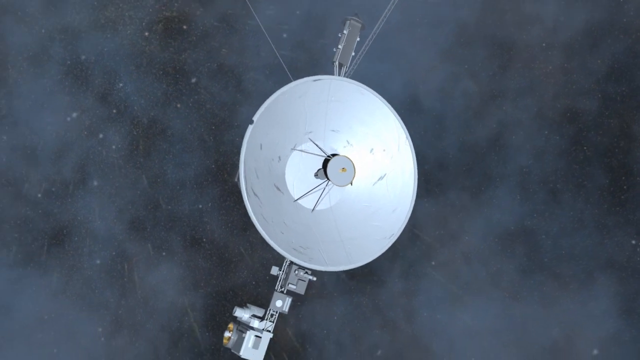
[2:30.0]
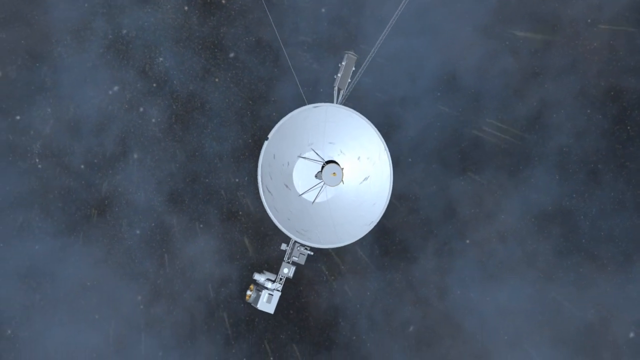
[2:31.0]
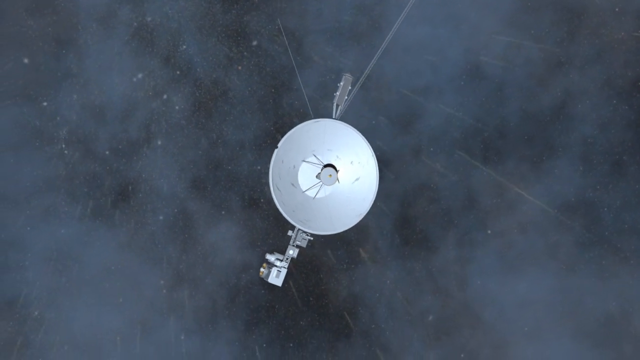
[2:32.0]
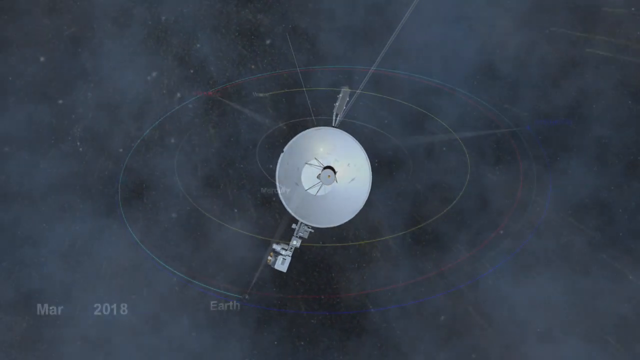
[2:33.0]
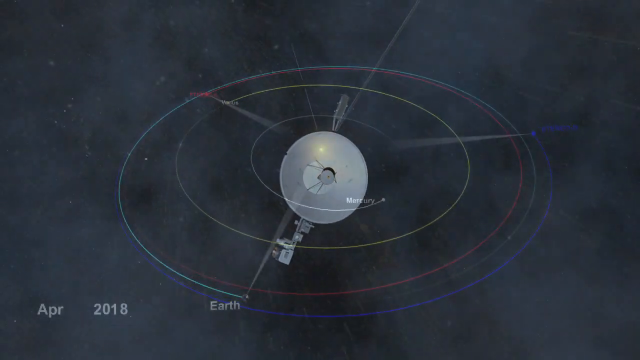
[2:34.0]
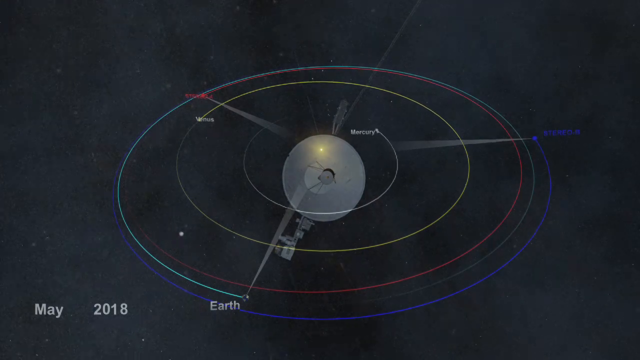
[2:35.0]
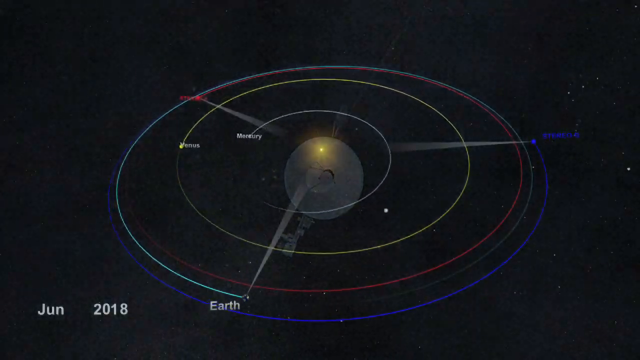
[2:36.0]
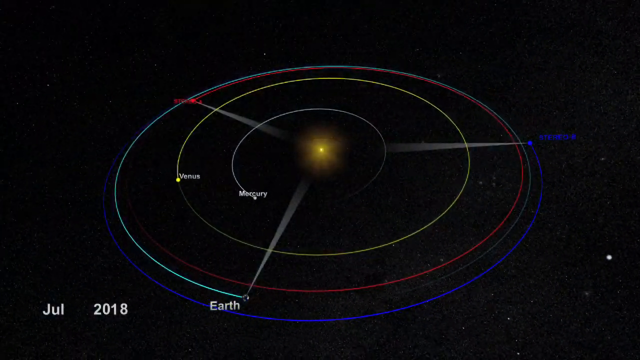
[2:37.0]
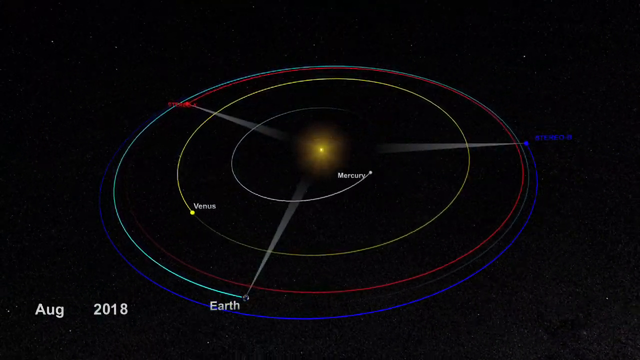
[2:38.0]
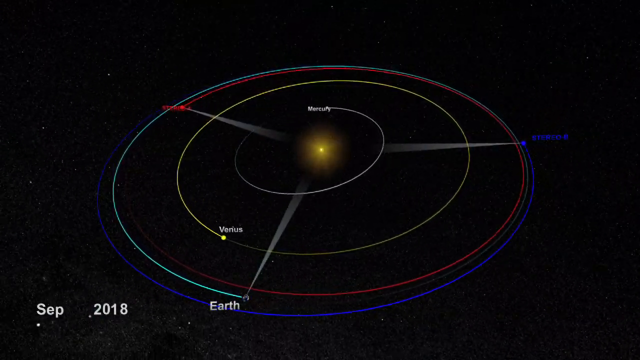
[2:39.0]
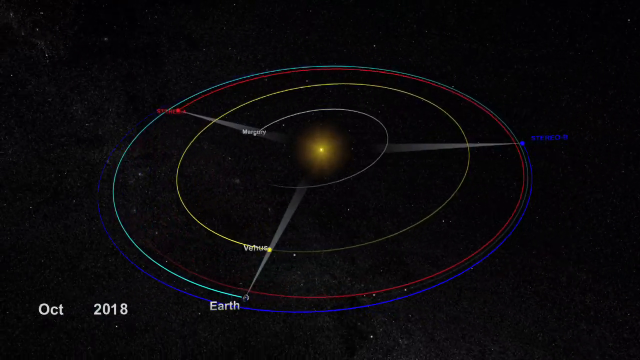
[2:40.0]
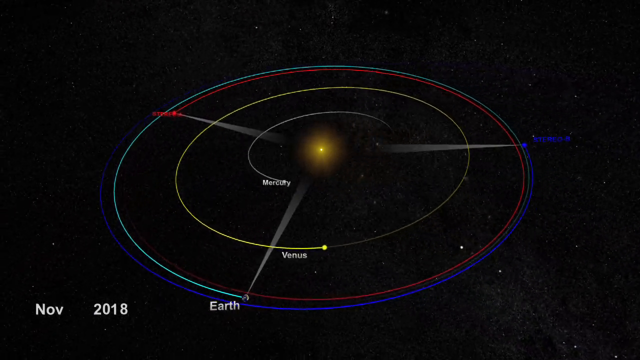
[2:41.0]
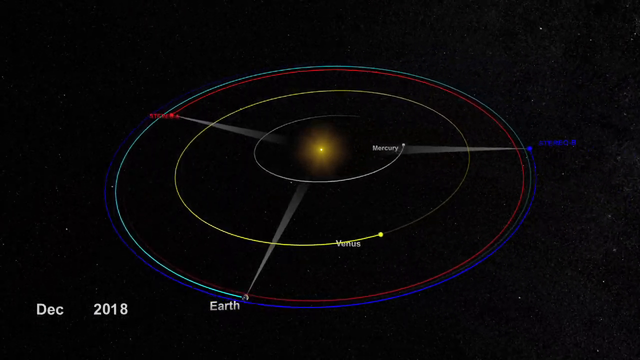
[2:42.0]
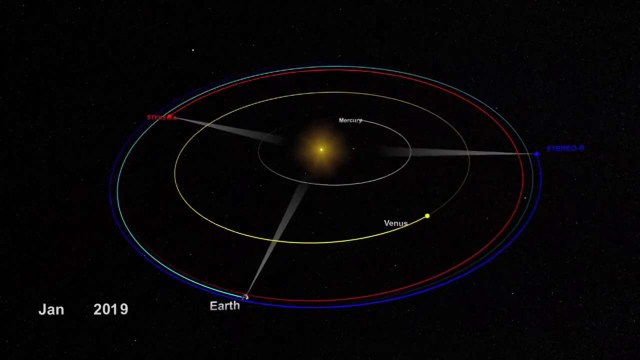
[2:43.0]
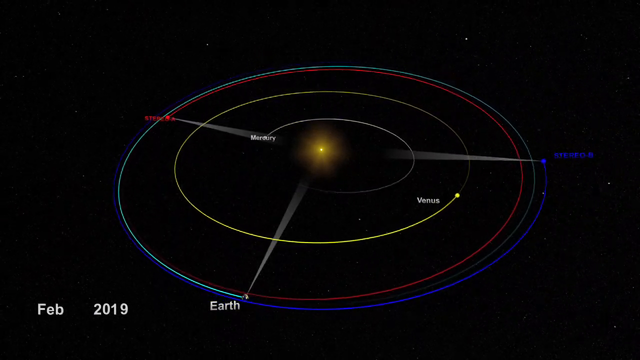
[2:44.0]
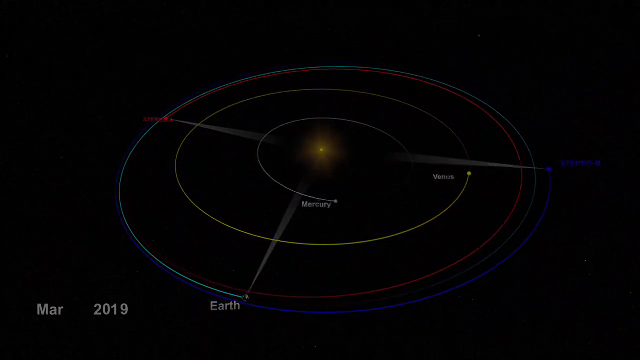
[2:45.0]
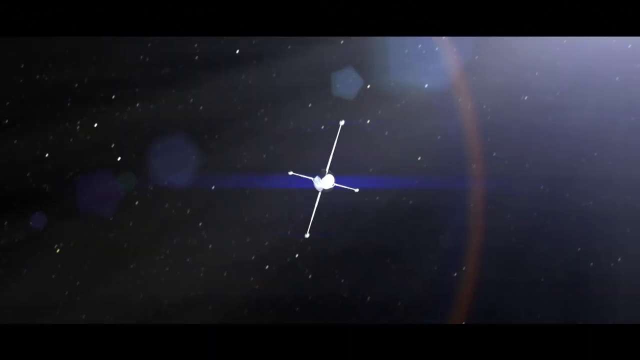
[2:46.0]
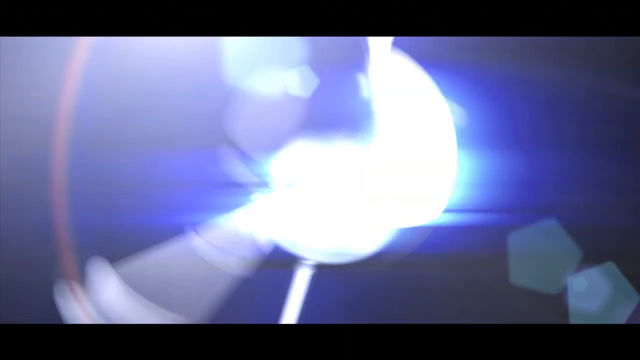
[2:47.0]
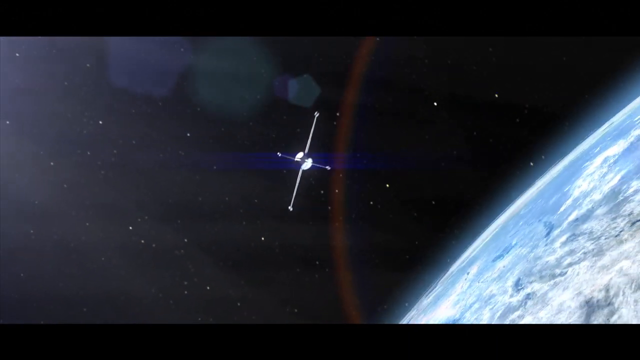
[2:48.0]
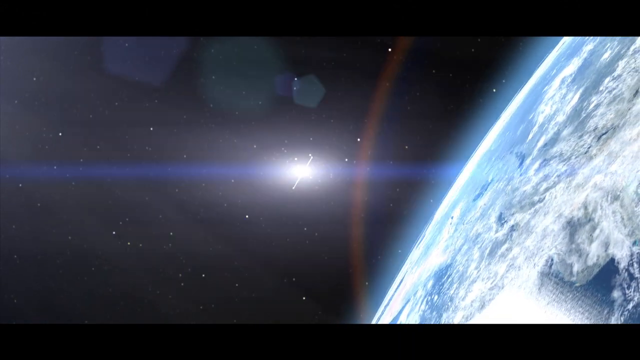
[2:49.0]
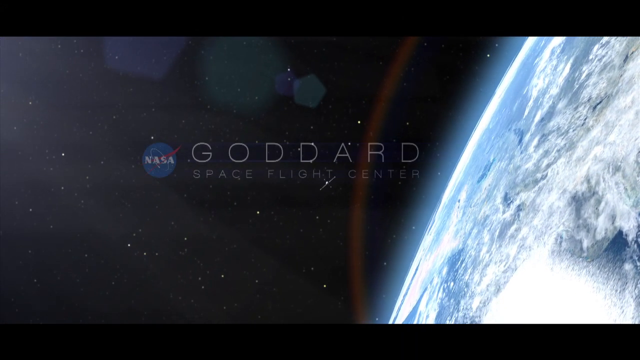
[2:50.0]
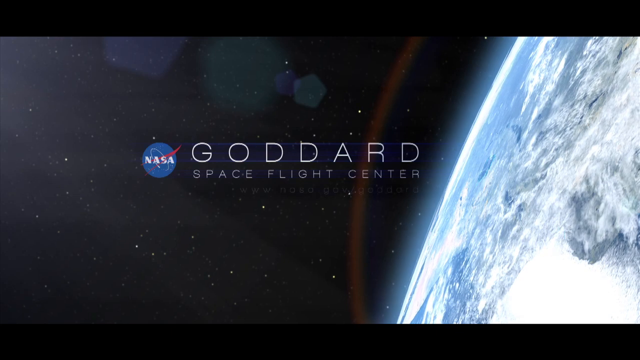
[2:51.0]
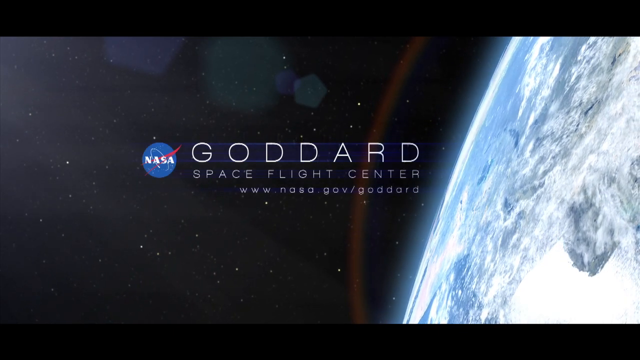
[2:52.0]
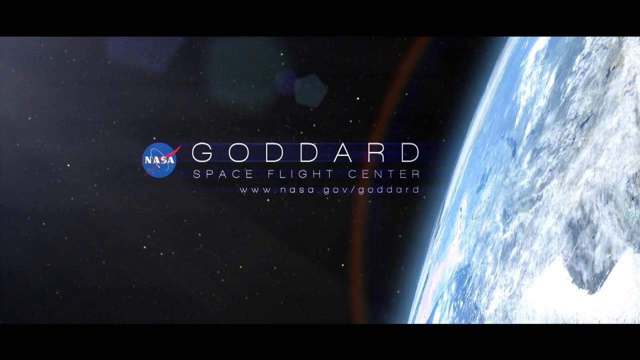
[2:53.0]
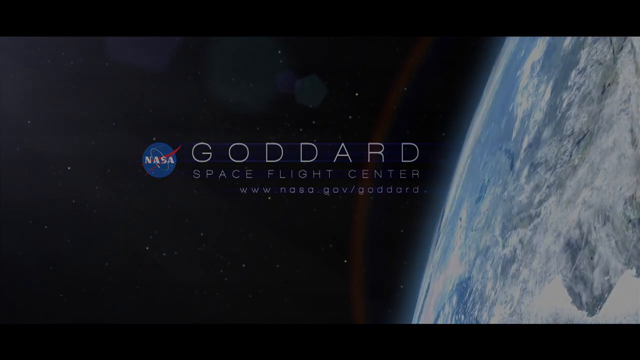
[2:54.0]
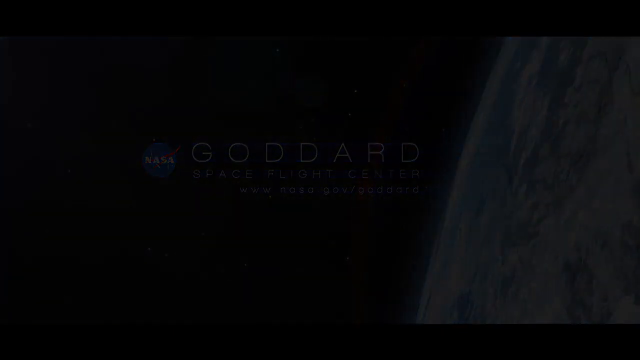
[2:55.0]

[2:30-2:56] A rendering shows a satellite in space with various white dots representing stars and other objects in the distance, and a sort of white cloud surrounding the satellite. The camera looks straight on at the satellite's dish, which is pointed towards the camera. The camera slowly zooms out as various white specks, implying heavy speed, go towards the satellite and beyond. The satellite render slowly fades away to a small model of the solar system showing Mercury, Venus and Earth rotating around the sun, along with two satellites labeled in red and blue text. They seem to maintain the same orbit as Earth, forming a sort of triangle around the sun, but the red and blue satellites eventually drift further and further apart, forming a Y and then a T shape with Earth. The screen fades to black and cuts to a satellite rapidly moving from left to right towards planet Earth, with a flash of light on the satellite as if it is reflecting light. Text then appears on the left against space, with Earth on the right, reading in white "Goddard Space Flight Center www.nasa.gov/Goddard," with the NASA logo to the left.